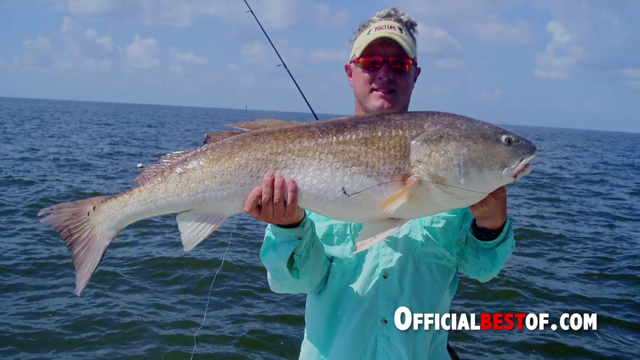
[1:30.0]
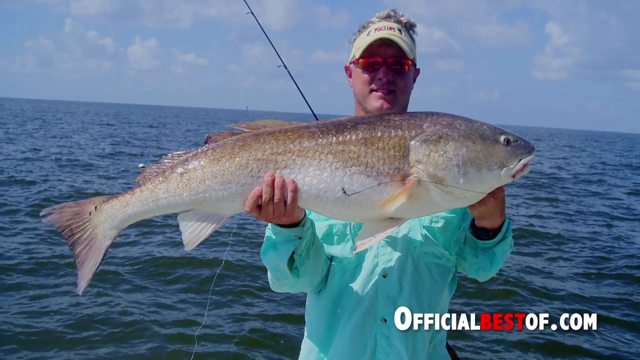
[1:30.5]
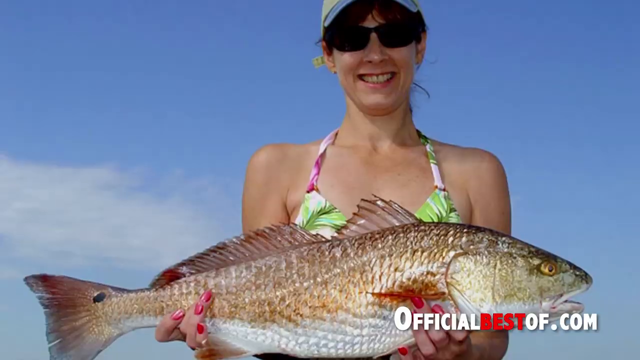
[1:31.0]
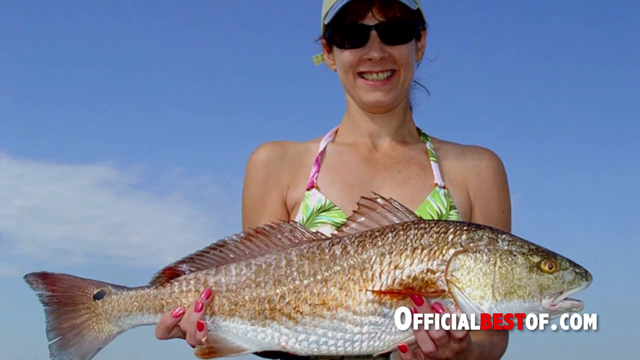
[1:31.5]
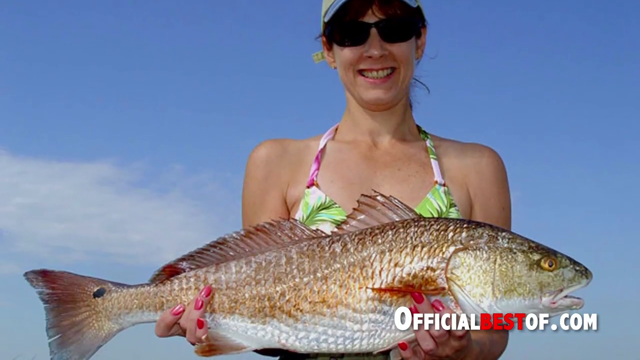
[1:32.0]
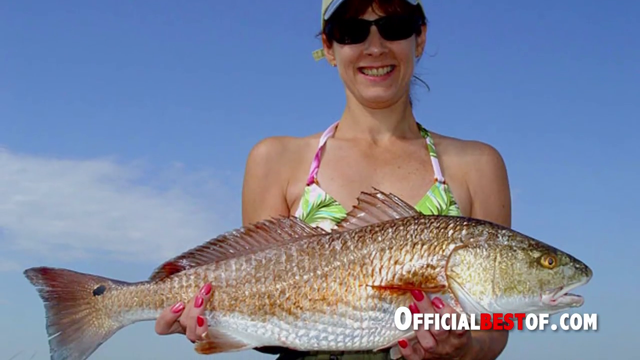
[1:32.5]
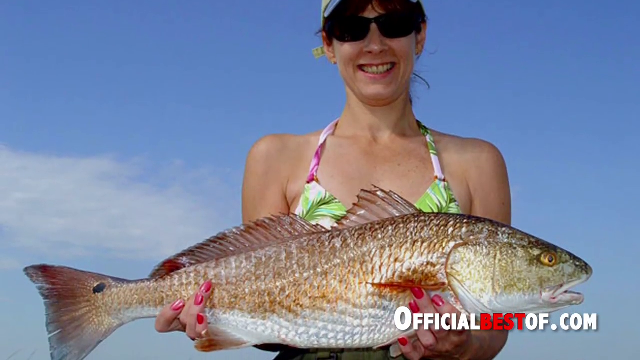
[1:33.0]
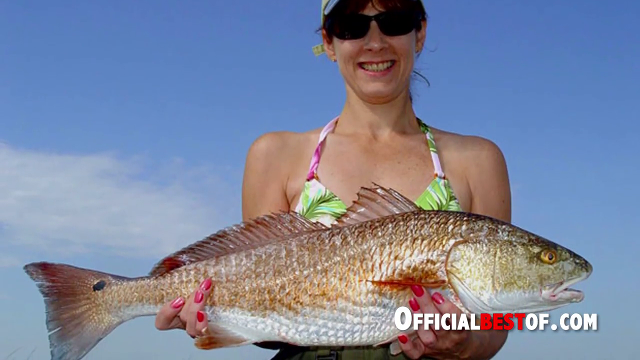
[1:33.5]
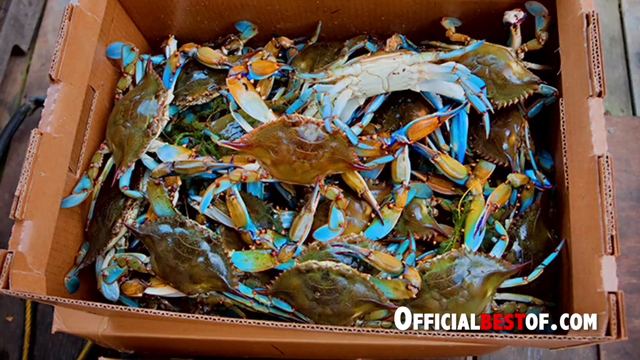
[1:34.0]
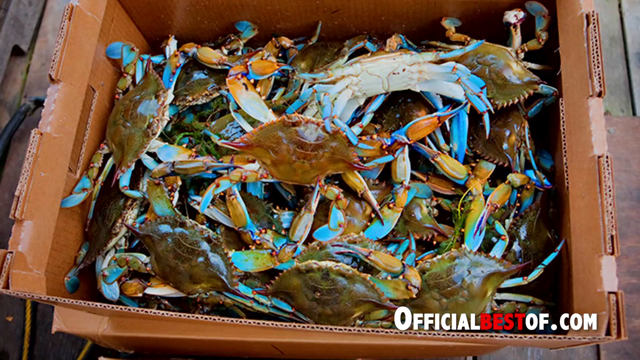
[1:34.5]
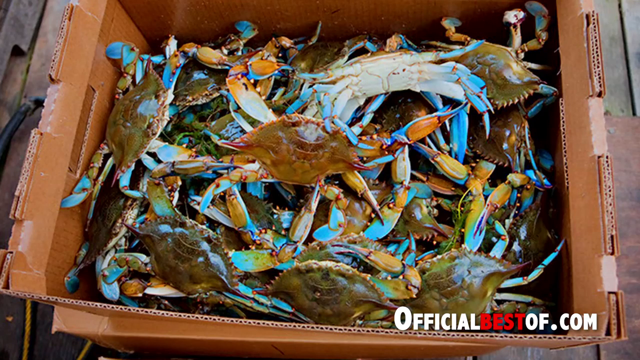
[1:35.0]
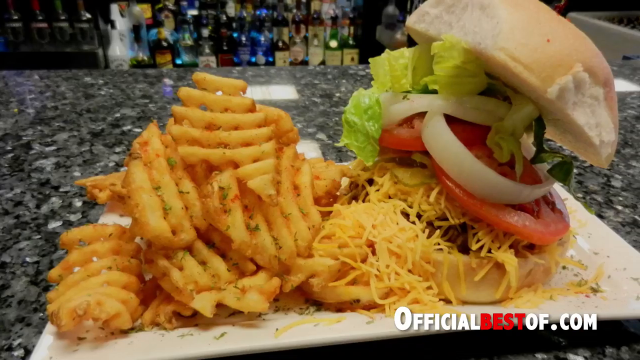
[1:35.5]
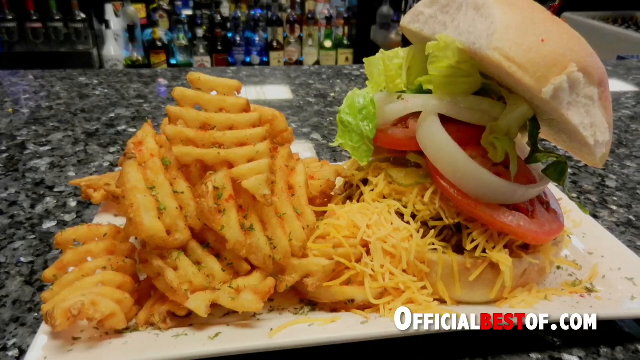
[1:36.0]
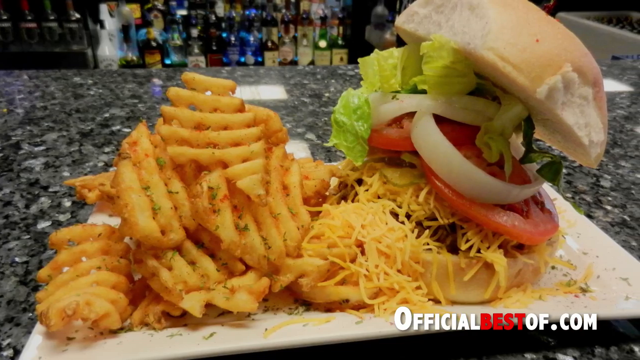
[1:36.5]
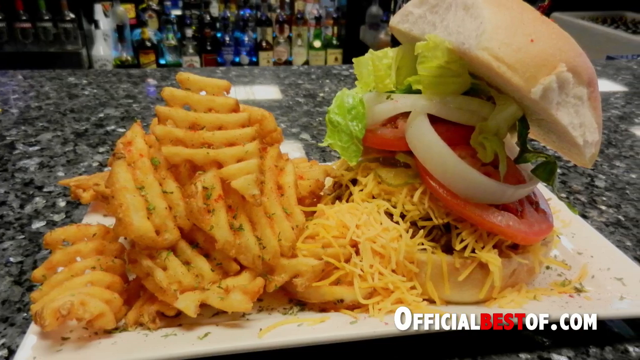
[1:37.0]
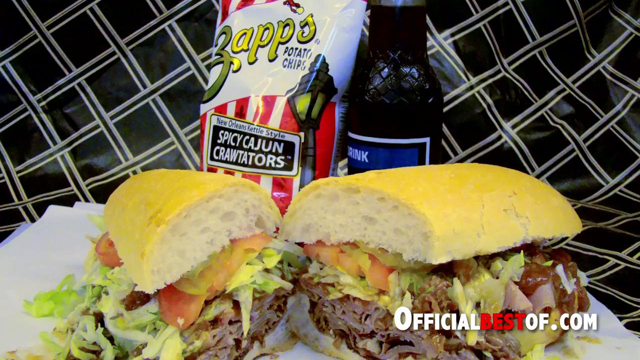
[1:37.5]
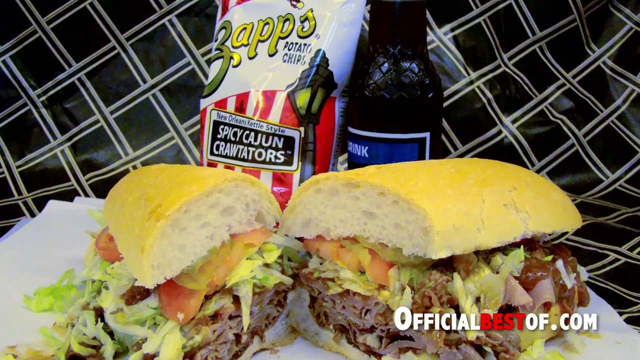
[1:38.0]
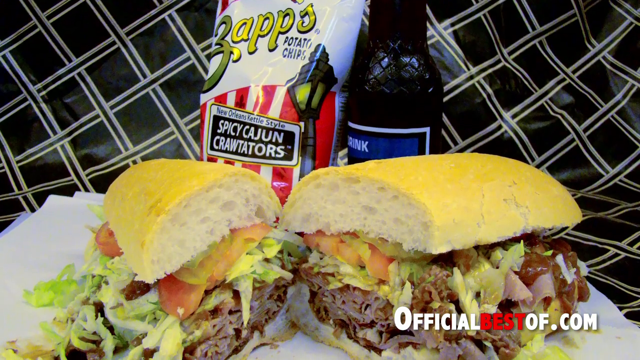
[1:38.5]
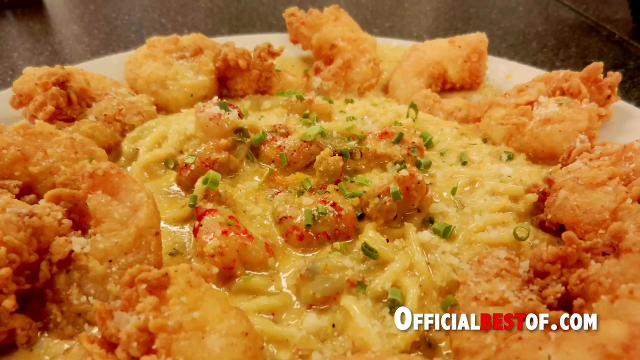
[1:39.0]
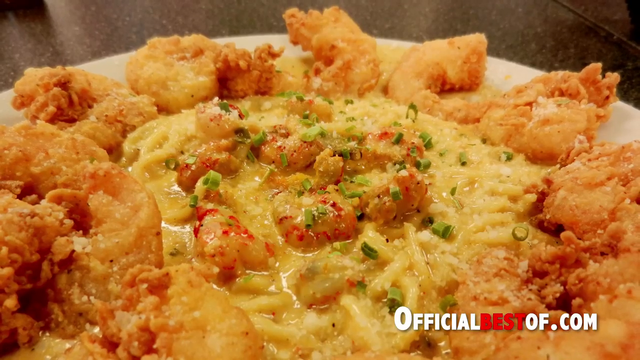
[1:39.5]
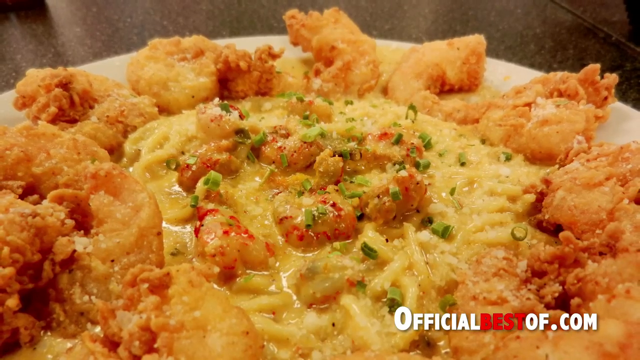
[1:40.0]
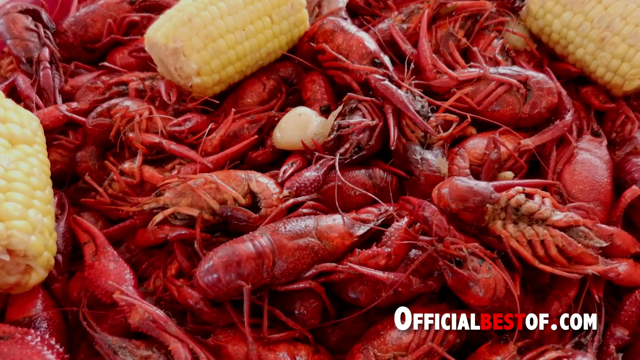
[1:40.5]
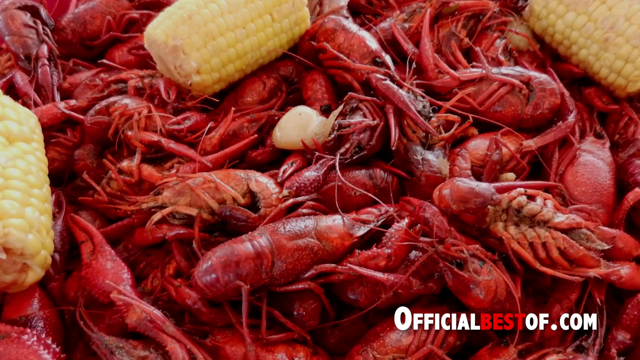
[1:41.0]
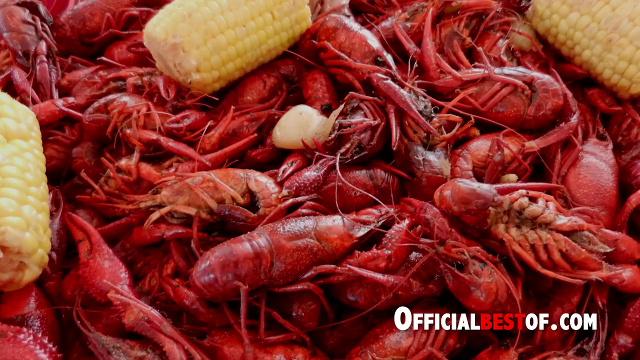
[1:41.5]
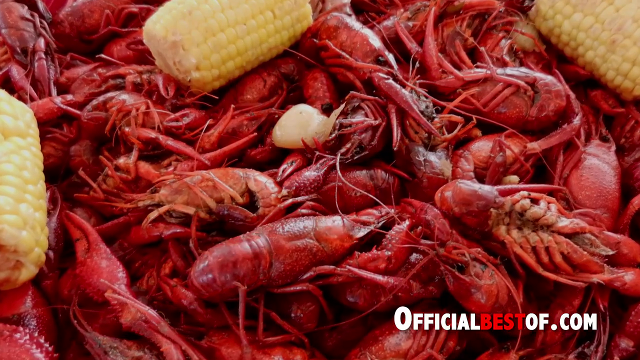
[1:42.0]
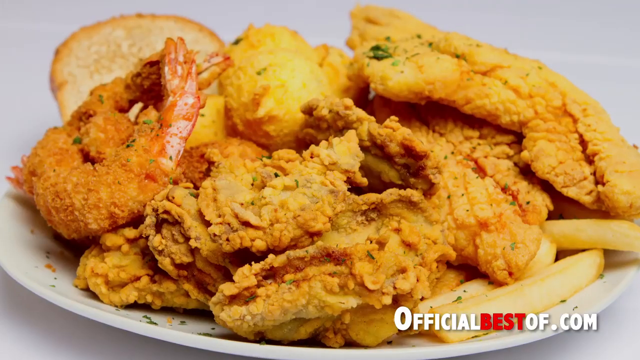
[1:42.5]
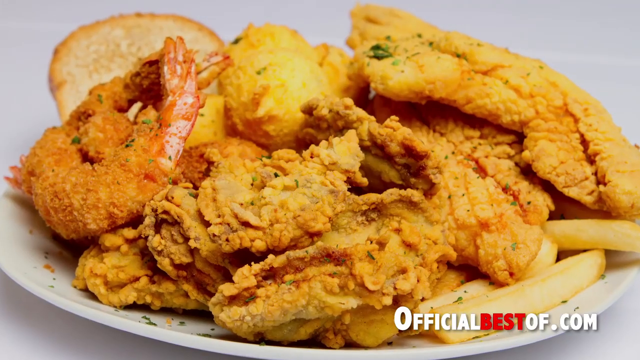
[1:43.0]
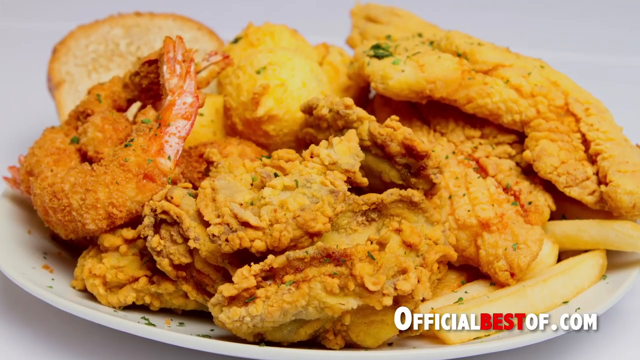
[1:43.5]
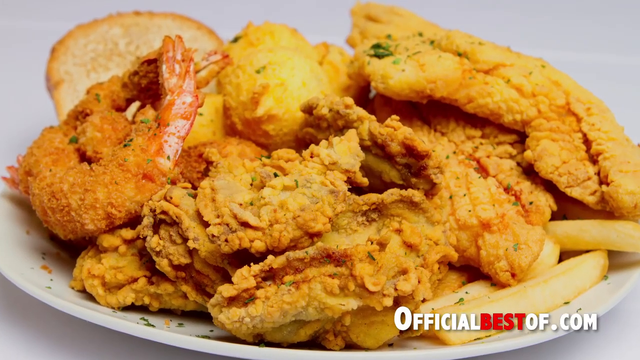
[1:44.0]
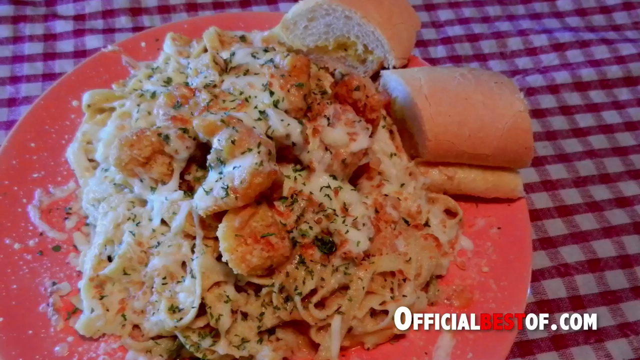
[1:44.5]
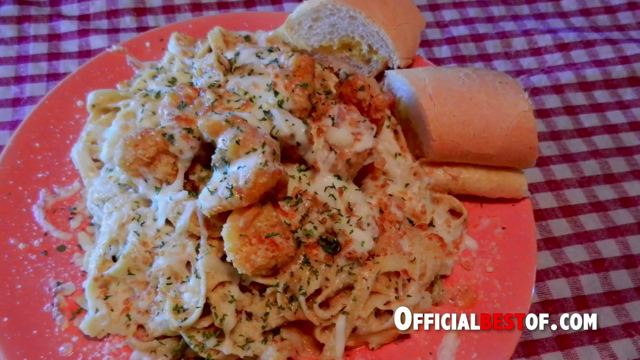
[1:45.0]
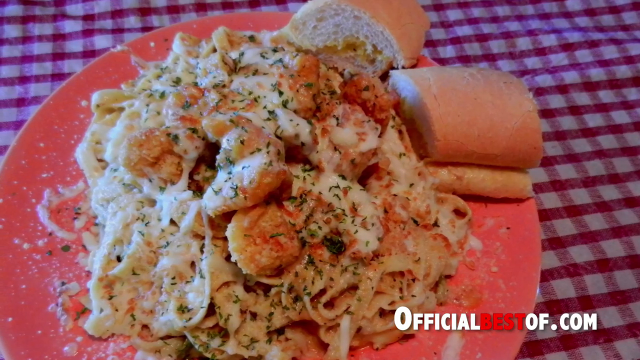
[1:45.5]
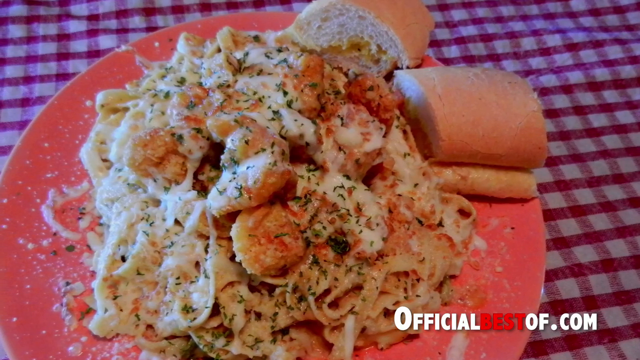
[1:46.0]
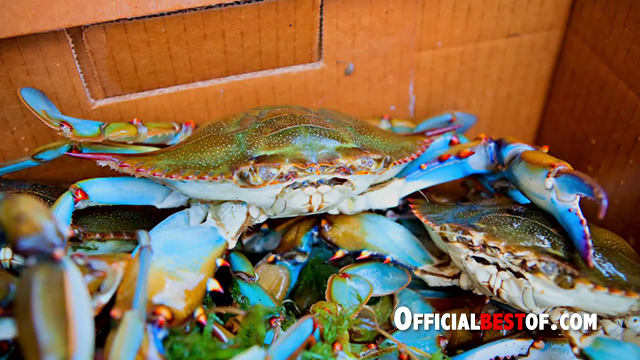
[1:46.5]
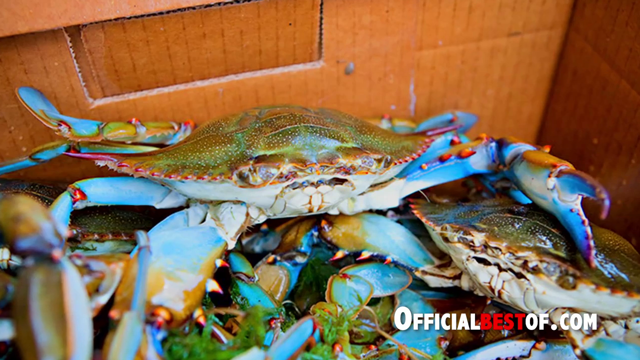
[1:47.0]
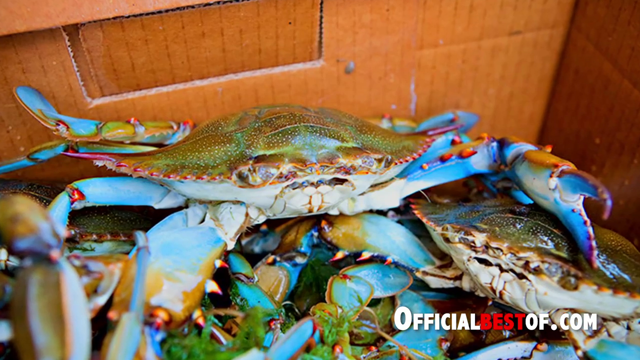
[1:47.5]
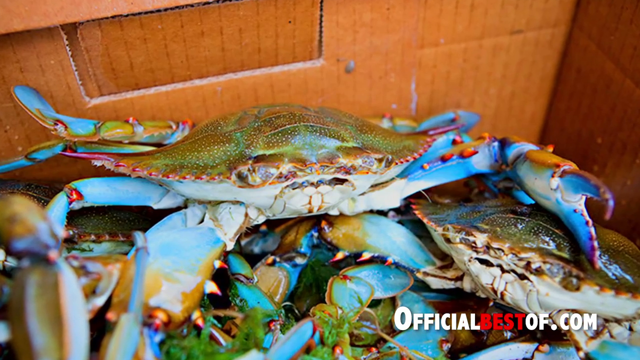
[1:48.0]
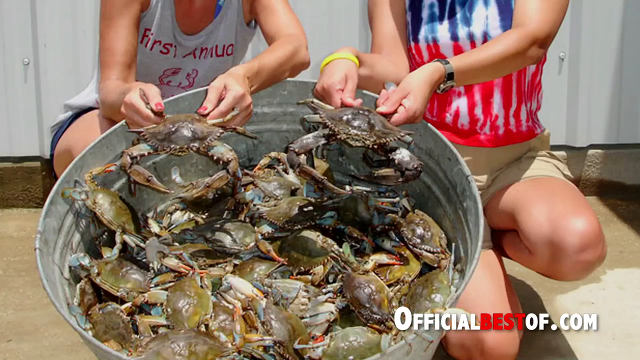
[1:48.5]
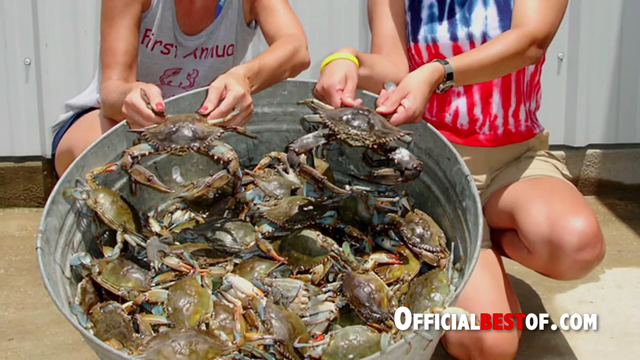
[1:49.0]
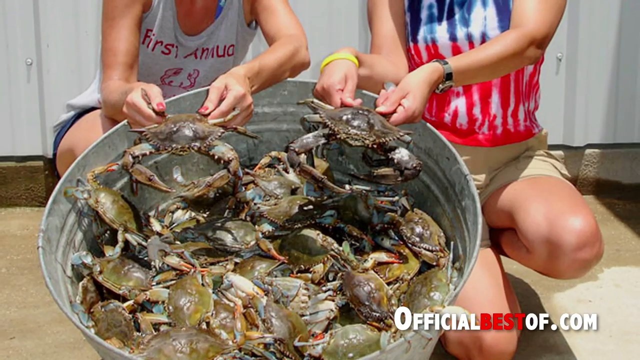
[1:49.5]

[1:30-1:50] The picture of the man holding up the big fish that is bigger than him appears. Another woman holds up a similarly sized fish that is bigger than her torso and about the same size as her head. A box full of colorful crabs follows, their claws blue, orange, yellow and green. A restaurant plate shows a burger on the right with some cheese at its bottom and what looks like waffle fries on the left. More food is shown, apparently a lot of fried fish foods such as shrimp and other items. Then a tin full of crabs appears.